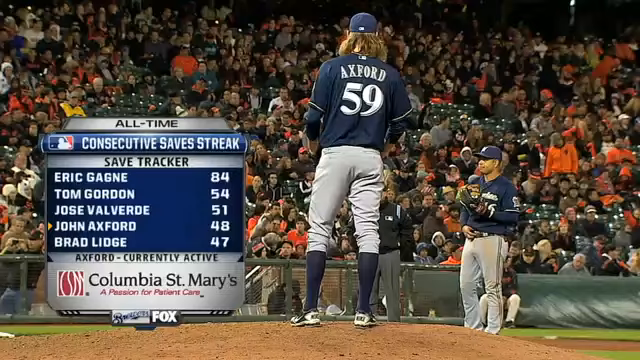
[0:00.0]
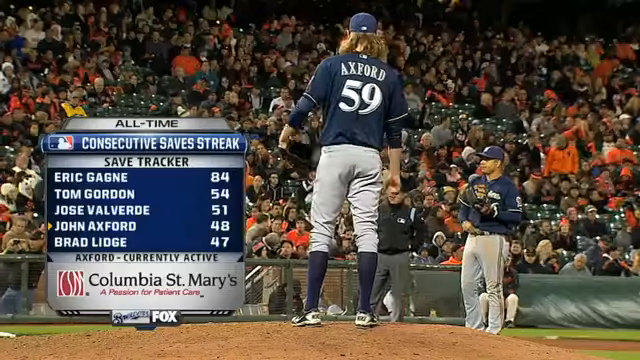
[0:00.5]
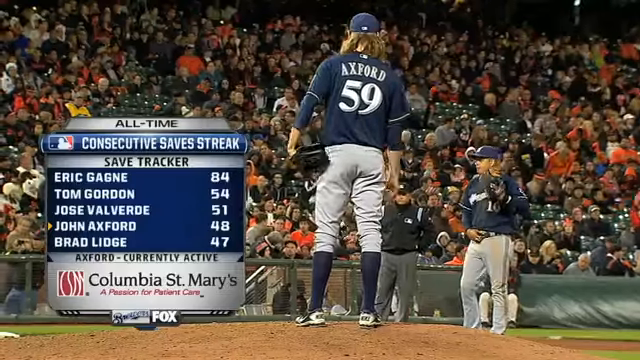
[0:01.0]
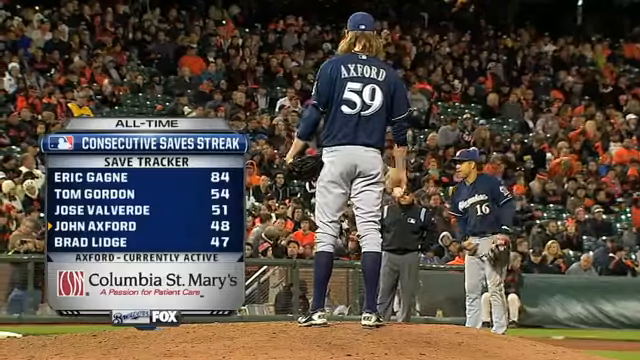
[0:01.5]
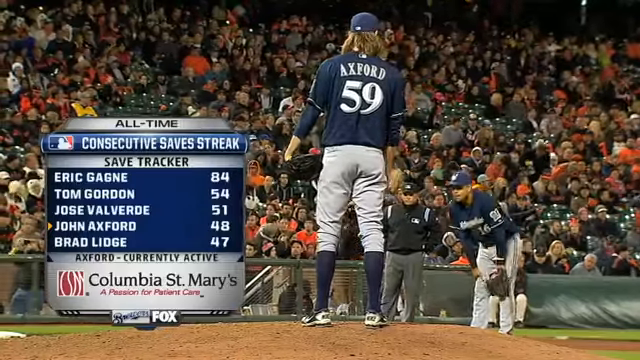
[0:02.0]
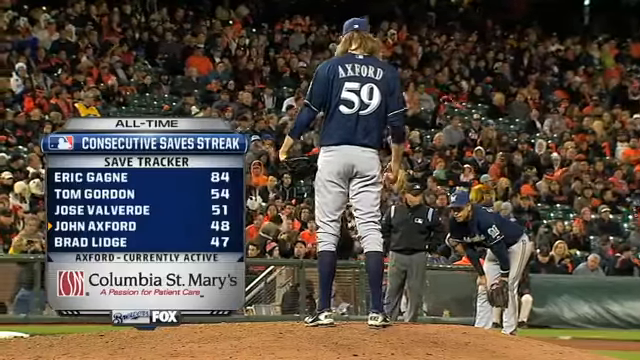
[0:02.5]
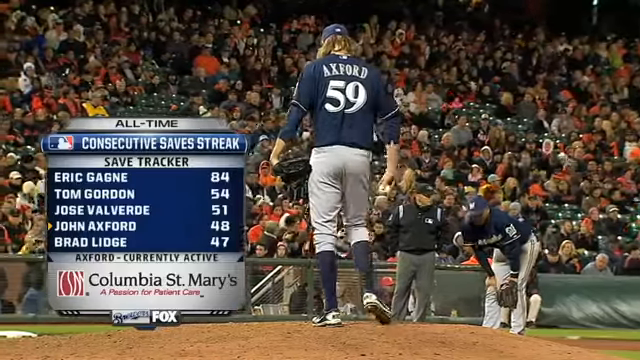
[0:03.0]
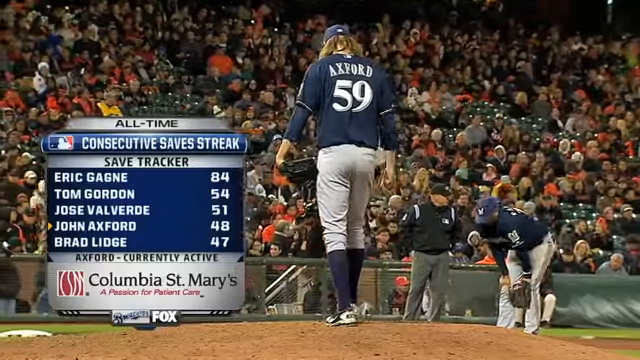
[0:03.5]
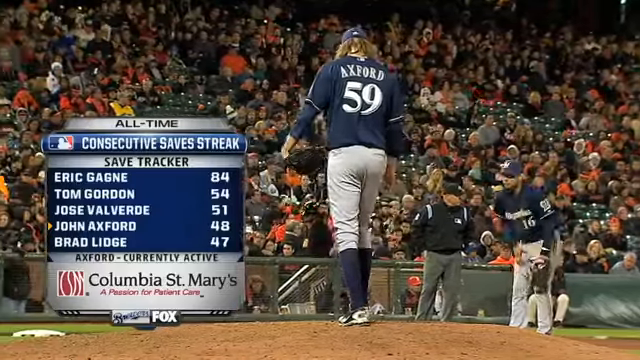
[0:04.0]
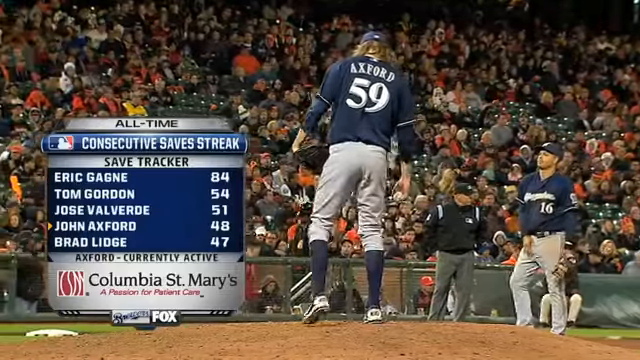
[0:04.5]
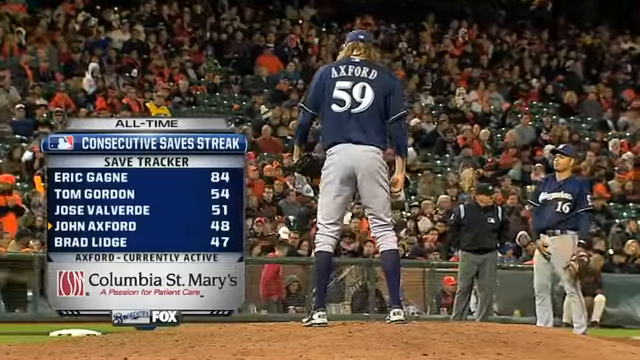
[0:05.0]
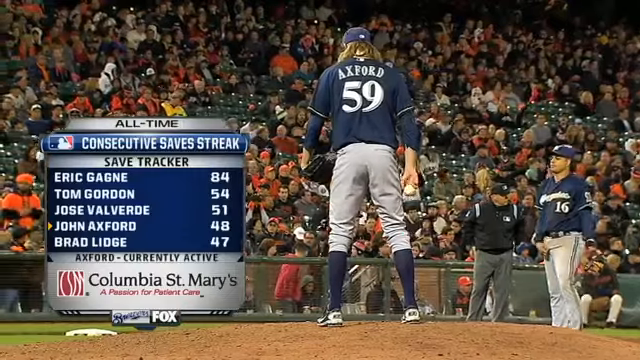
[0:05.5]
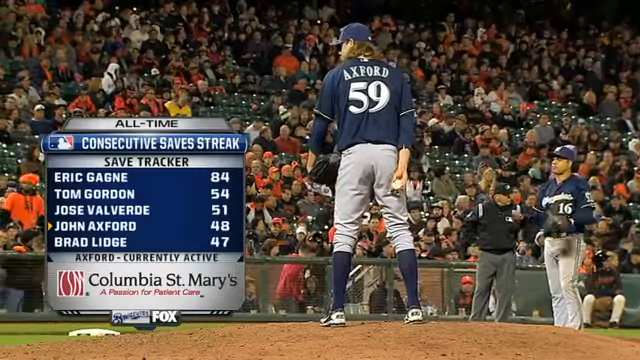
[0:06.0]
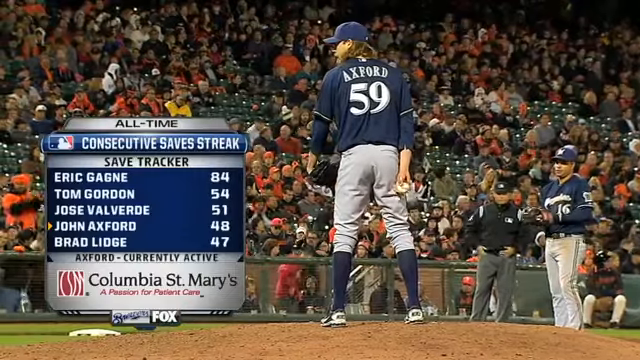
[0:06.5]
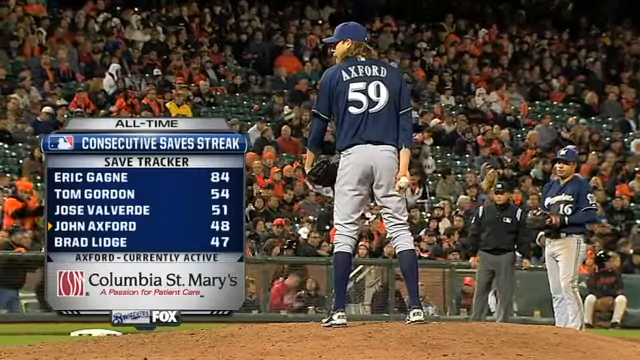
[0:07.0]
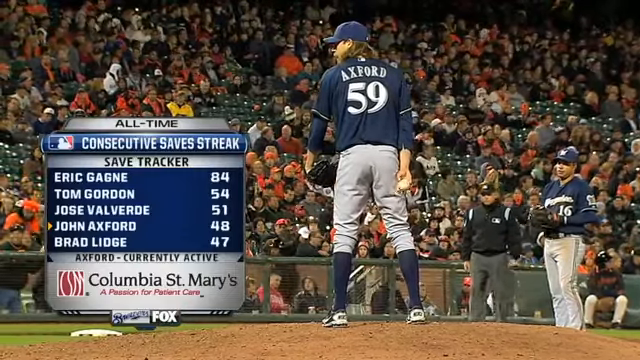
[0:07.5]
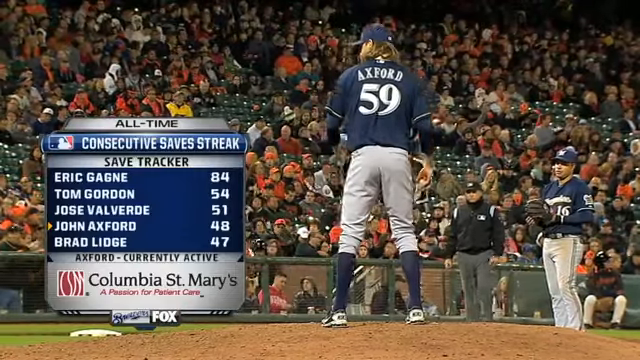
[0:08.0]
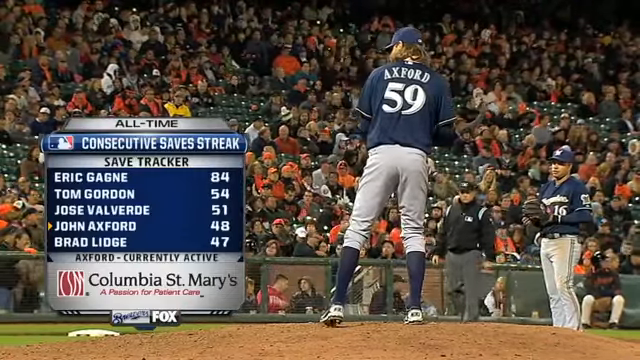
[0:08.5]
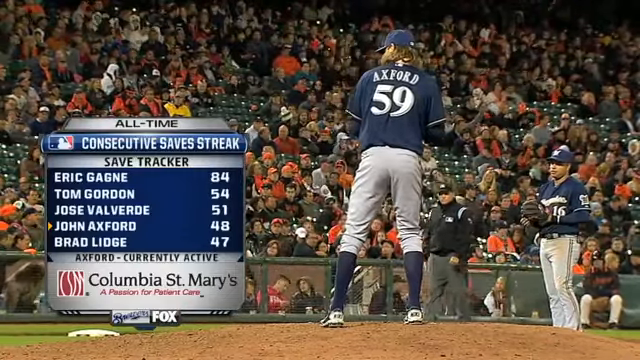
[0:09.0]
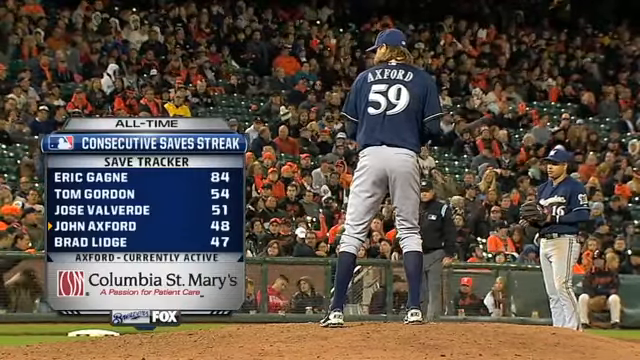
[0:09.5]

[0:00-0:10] An MLB game shows a pitcher from a ground-level angle. The back of his jersey reads "Axford" with the number 59. On the left, on-screen text reads "all-time consecutive save streak, save tracker," with five names and their stats to the right; Axford, the current pitcher, is fourth on the list. In the background is a stadium filled with people sitting down. Another player in a navy blue jersey is on the right side, and the umpire, wearing black, is in the background. Axford prepares to throw a pitch, holding the ball in his right hand, which is behind him, while the glove on his left hand is by his side. He spins the ball with his thumb a couple of times and moves it to the front of his body.